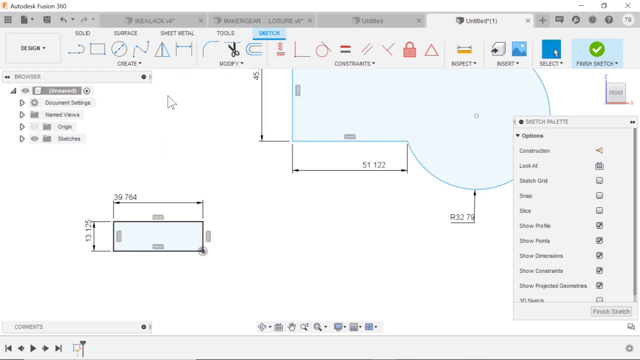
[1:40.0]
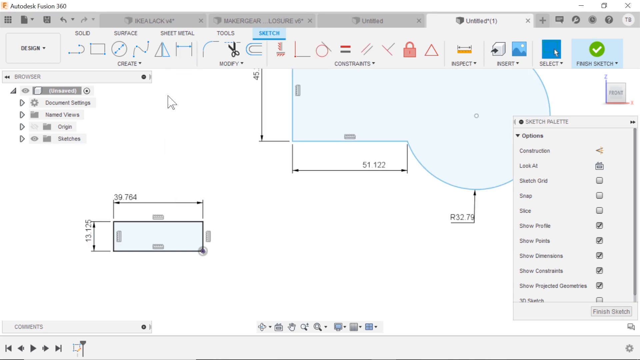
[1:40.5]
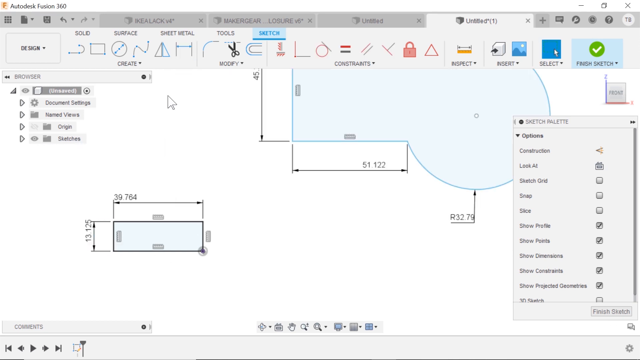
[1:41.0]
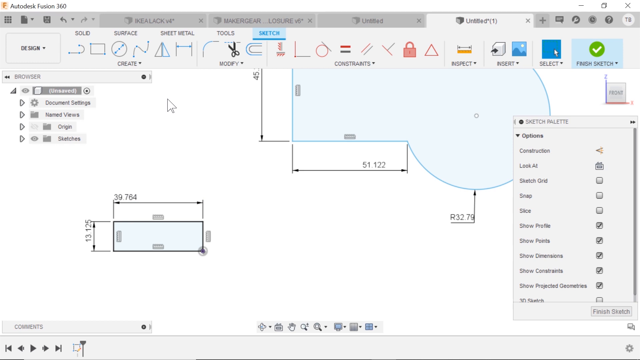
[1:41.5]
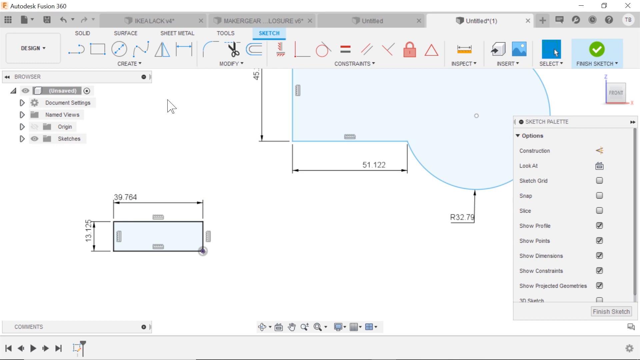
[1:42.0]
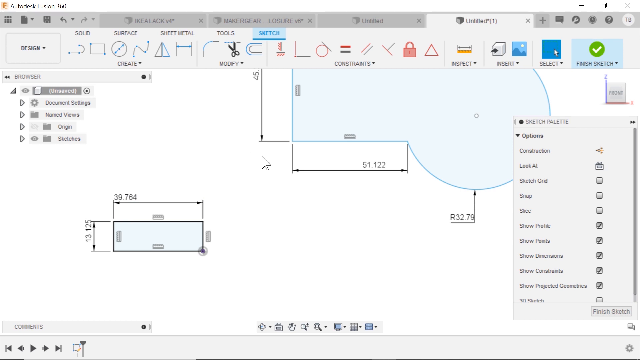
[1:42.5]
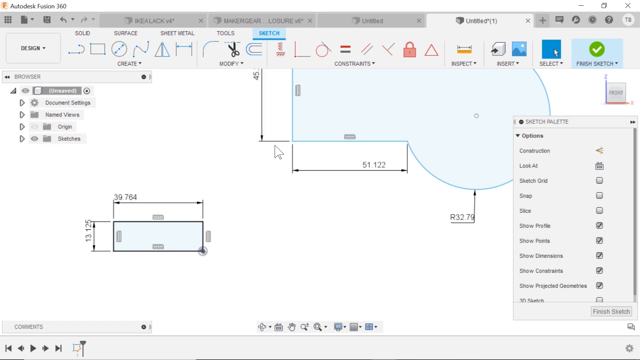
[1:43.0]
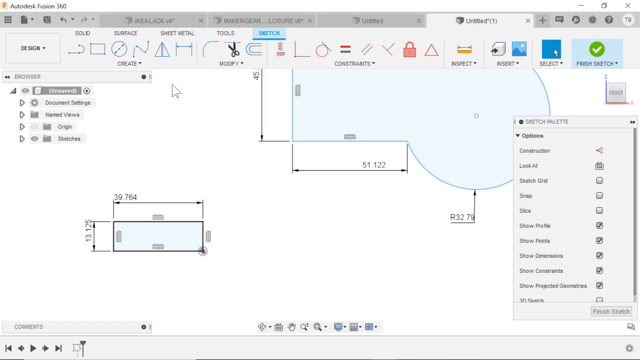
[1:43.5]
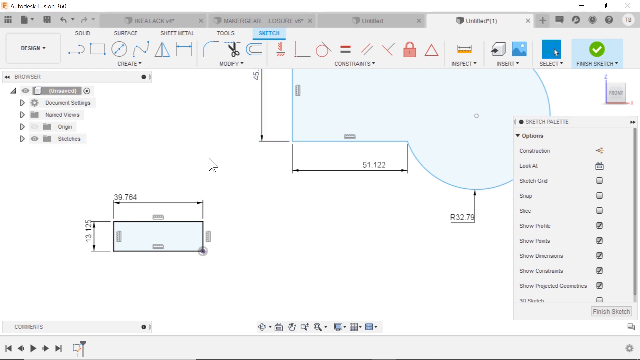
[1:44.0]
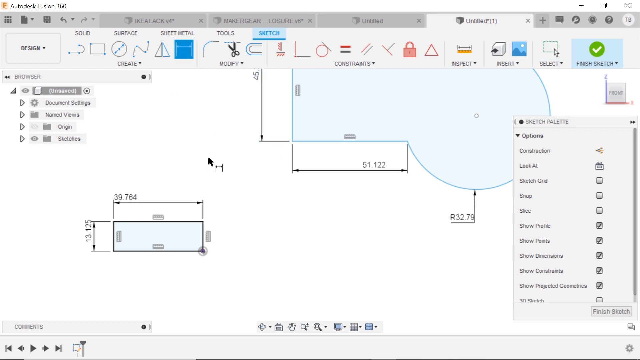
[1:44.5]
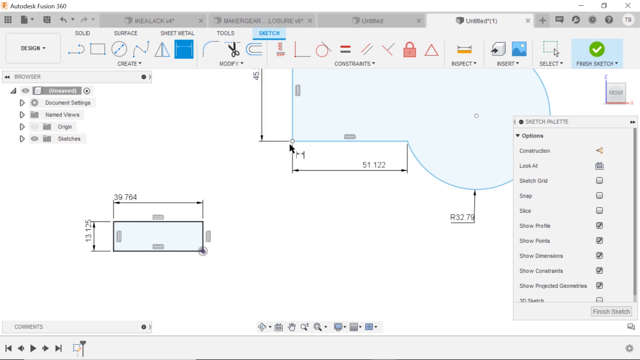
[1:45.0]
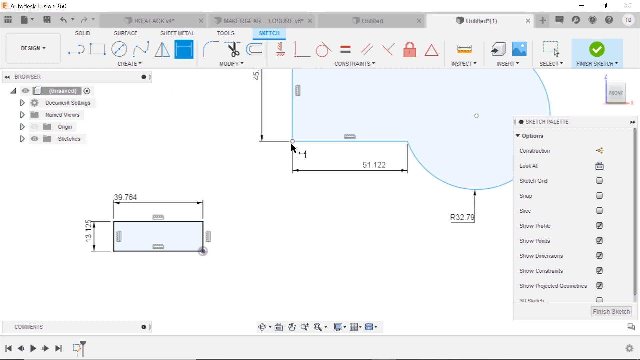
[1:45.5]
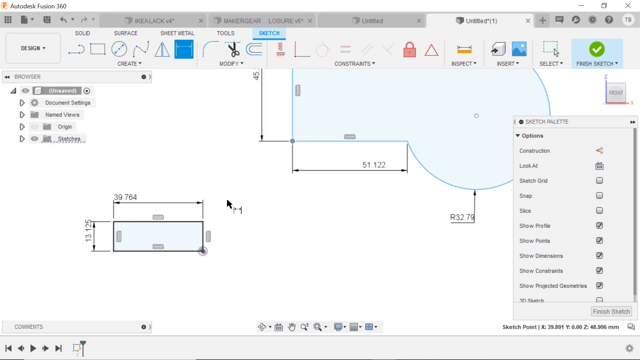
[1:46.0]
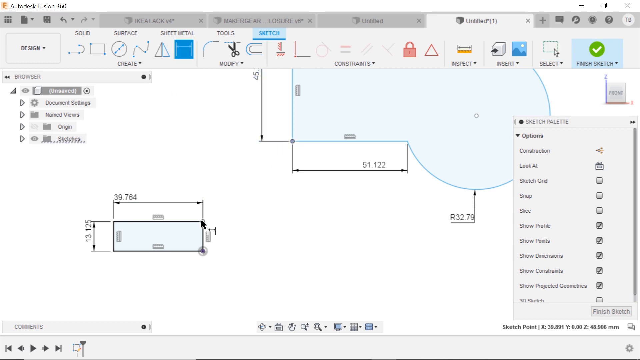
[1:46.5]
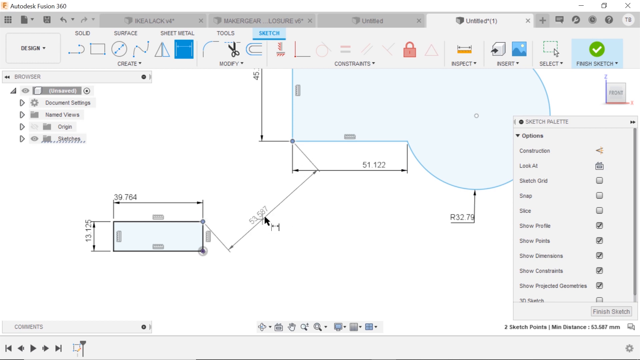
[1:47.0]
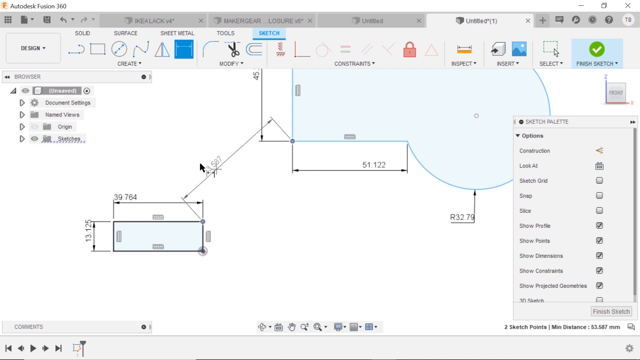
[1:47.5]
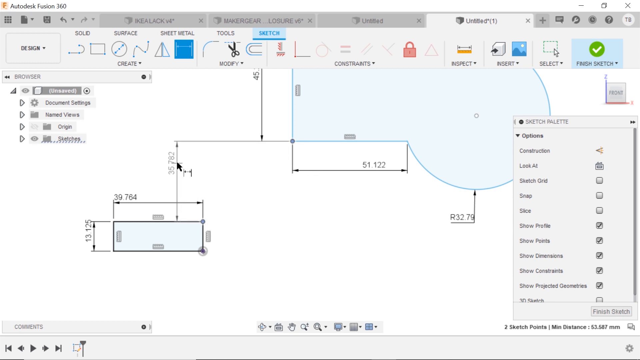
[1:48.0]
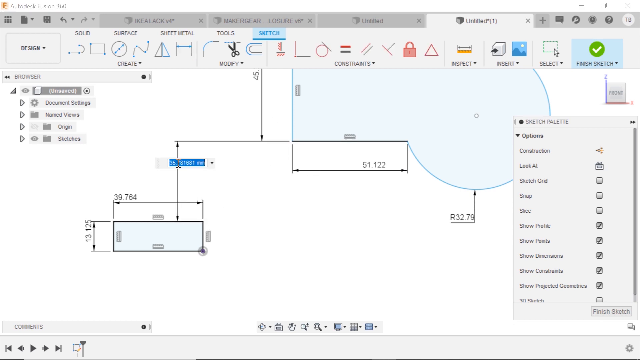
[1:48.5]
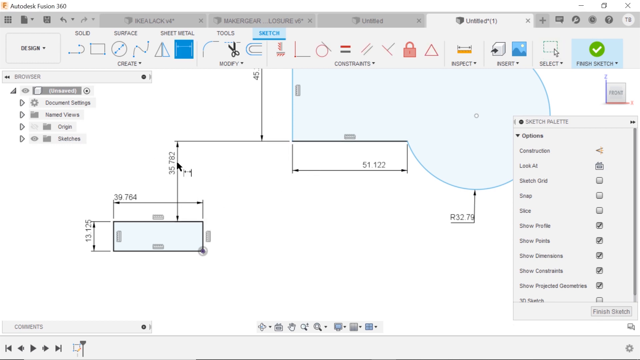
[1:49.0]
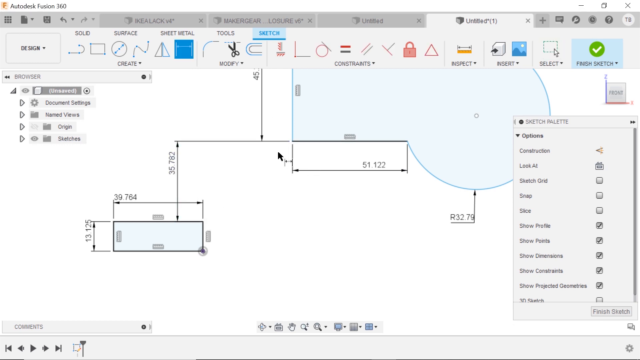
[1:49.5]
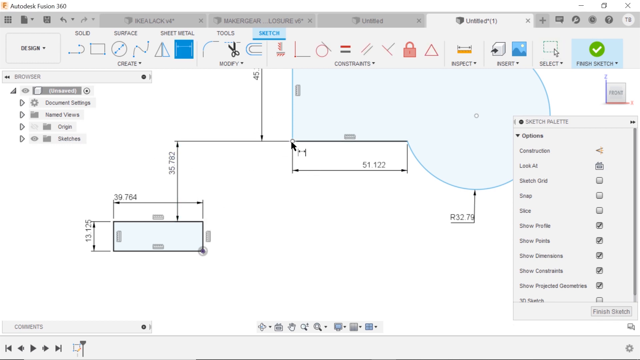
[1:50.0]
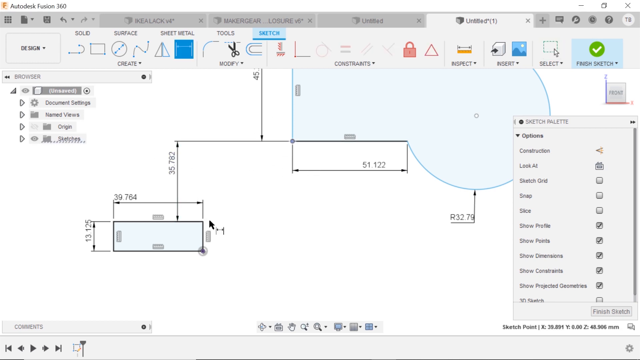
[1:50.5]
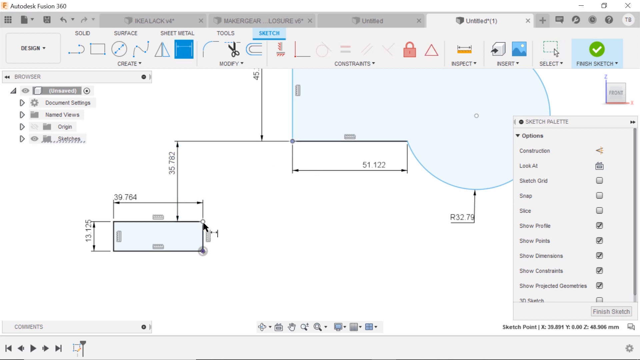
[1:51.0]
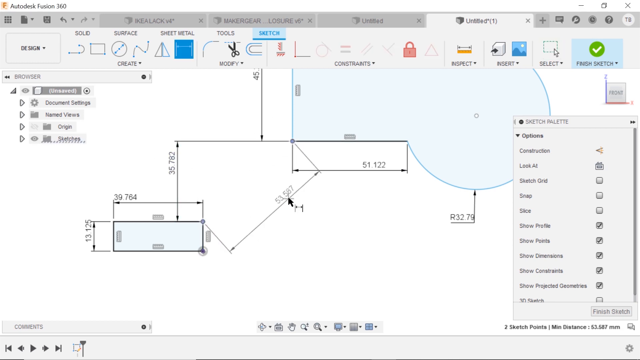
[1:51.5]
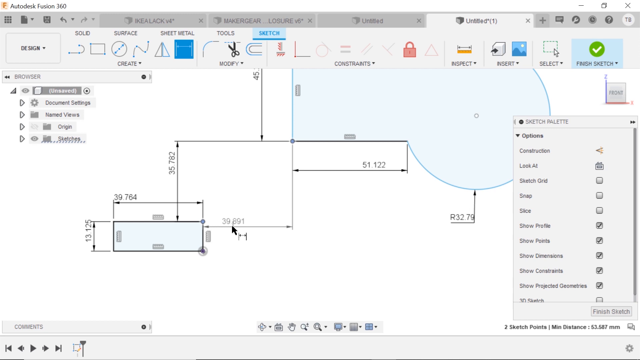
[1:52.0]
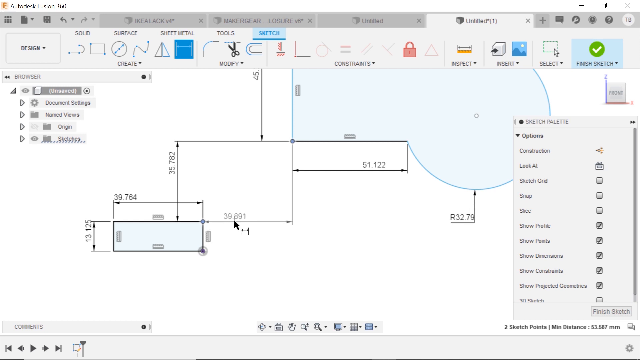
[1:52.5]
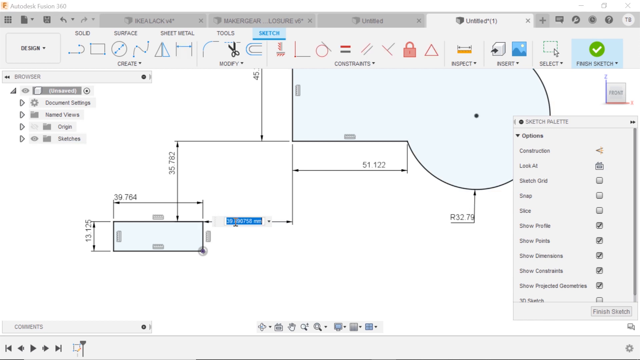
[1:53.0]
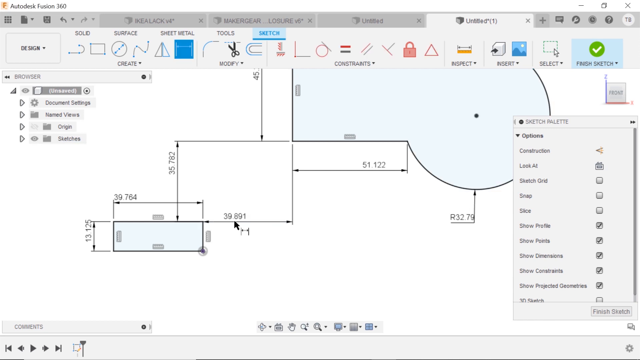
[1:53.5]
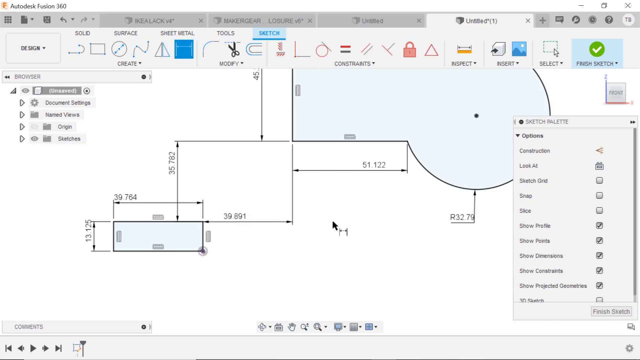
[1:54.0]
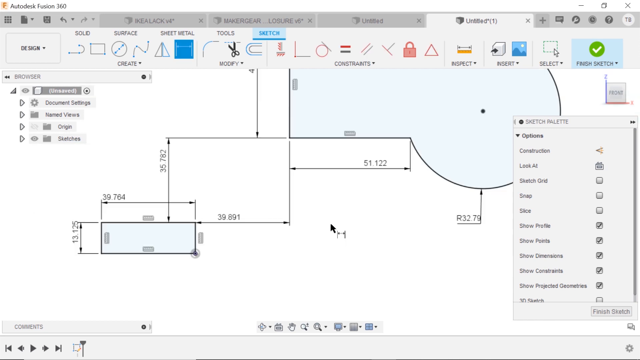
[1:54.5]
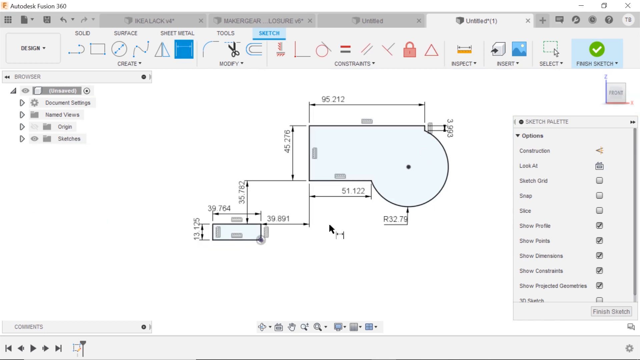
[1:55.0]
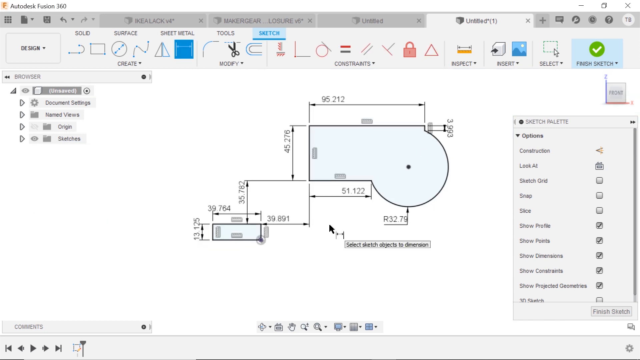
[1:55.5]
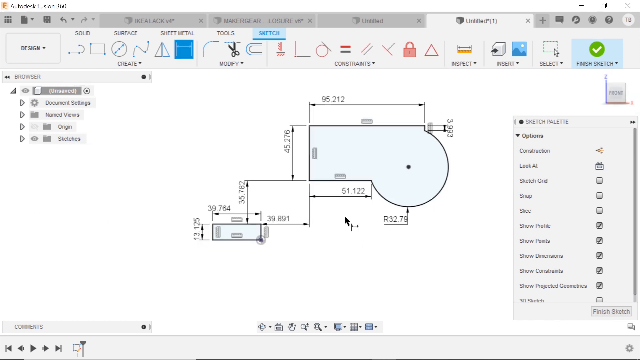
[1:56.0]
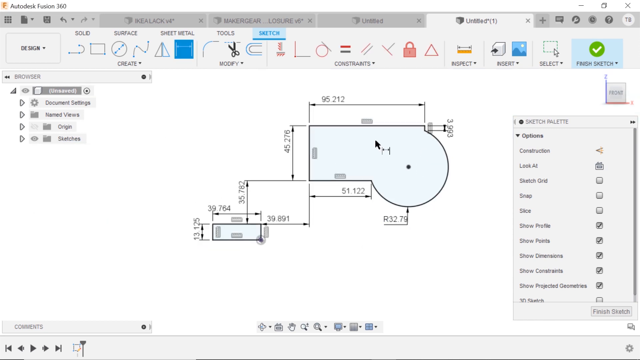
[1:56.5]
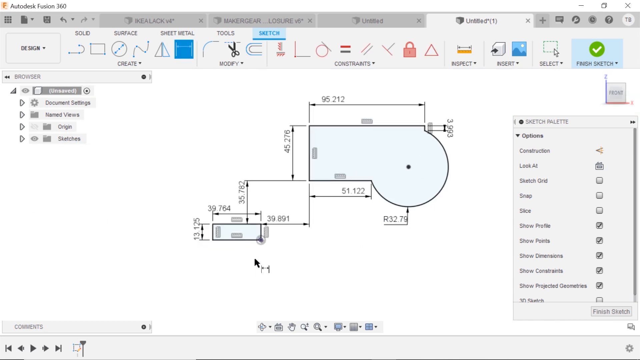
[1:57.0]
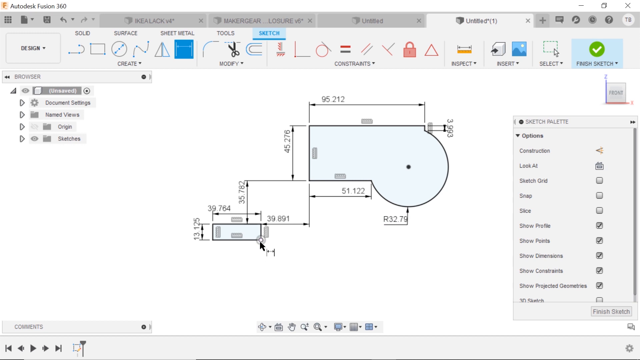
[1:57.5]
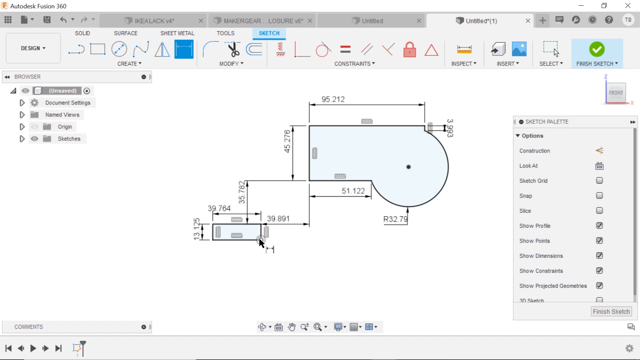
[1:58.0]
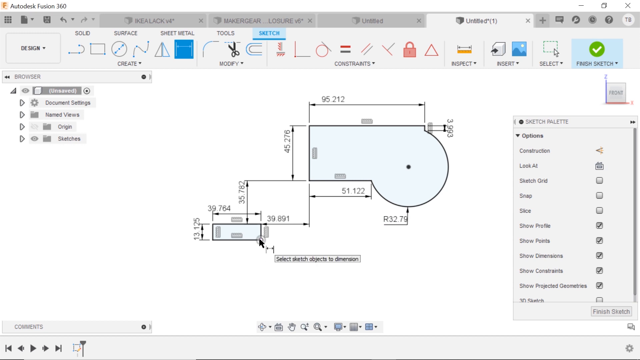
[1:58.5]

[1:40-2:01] The user grabs the drawn rectangle and drags it further to the lower left, well away from the rest of the diagram. The mouse sort of moves between the two shapes, and another icon at the top is highlighted, apparently a tool for making measurements. The user measures the distance between the upper right corner of the new rectangle and the lower left corner of the original diagram. A horizontal line is drawn showing the distance between them along with the actual value. The distance is also shown as a direct line between the two points and as a path going to the right and upward, like a right triangle: first the hypotenuse is measured, then the two other sides.